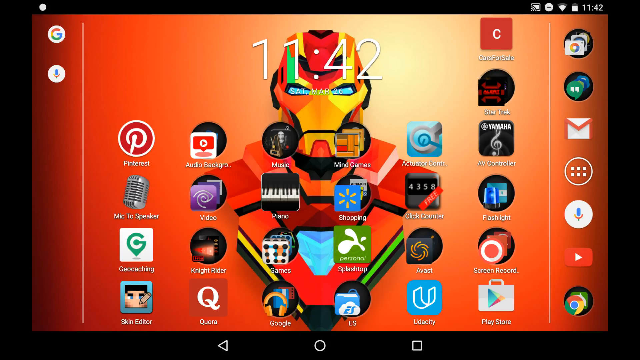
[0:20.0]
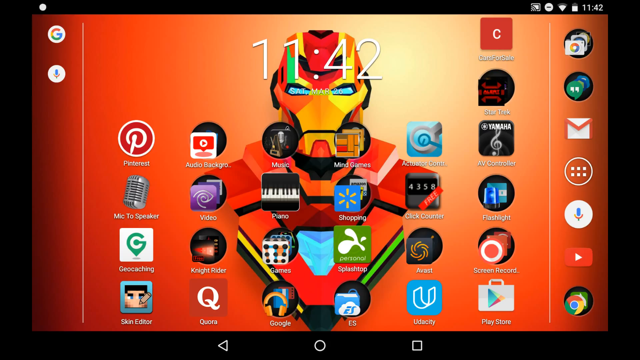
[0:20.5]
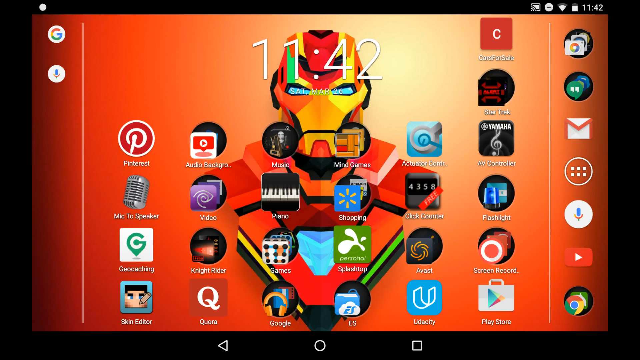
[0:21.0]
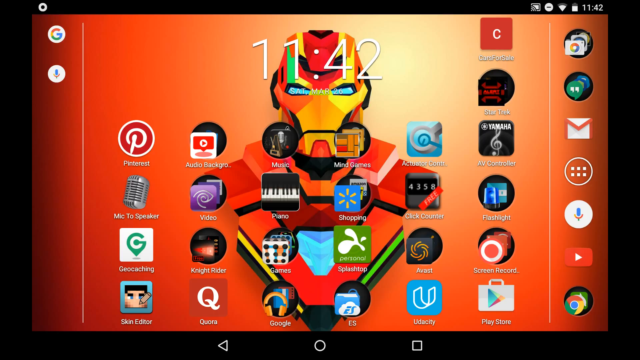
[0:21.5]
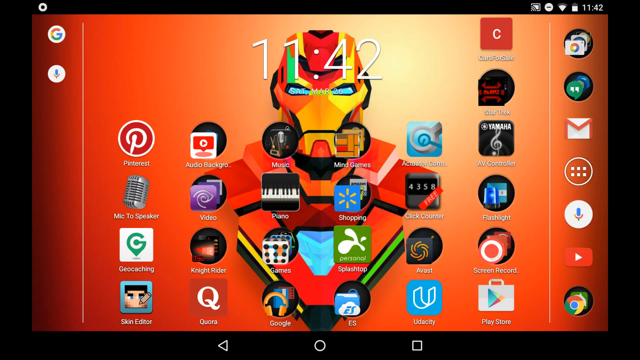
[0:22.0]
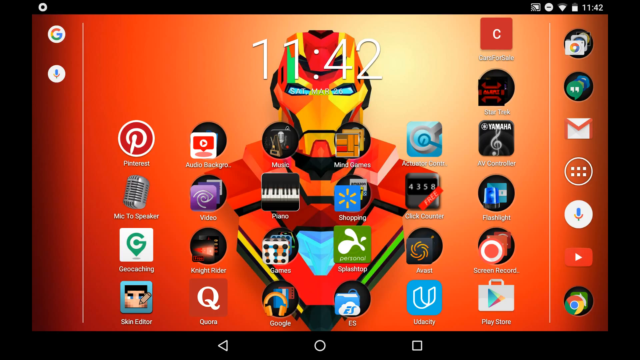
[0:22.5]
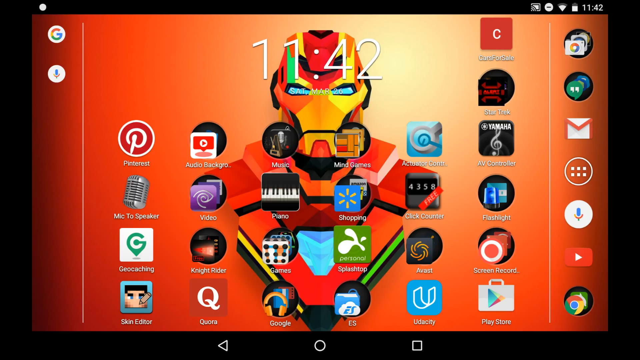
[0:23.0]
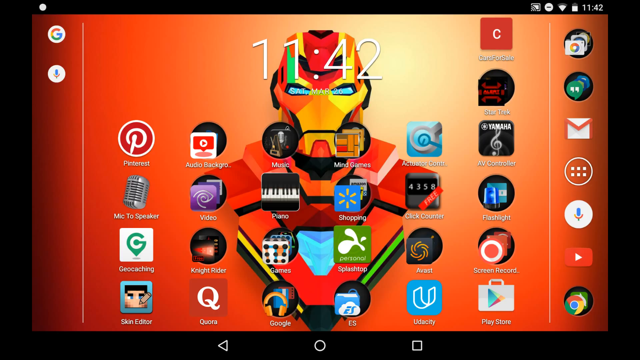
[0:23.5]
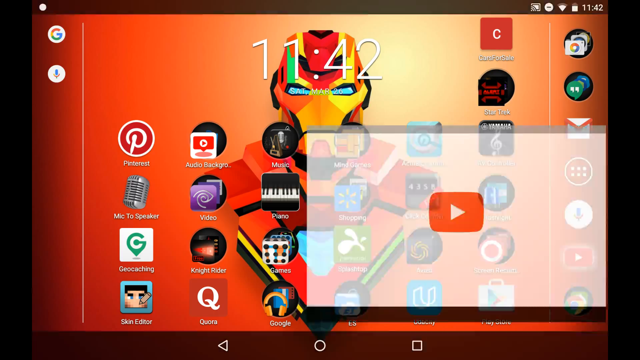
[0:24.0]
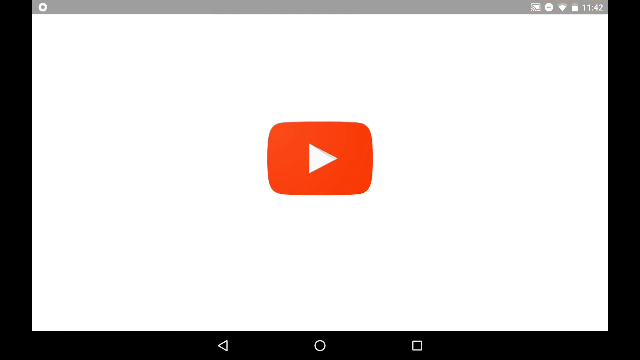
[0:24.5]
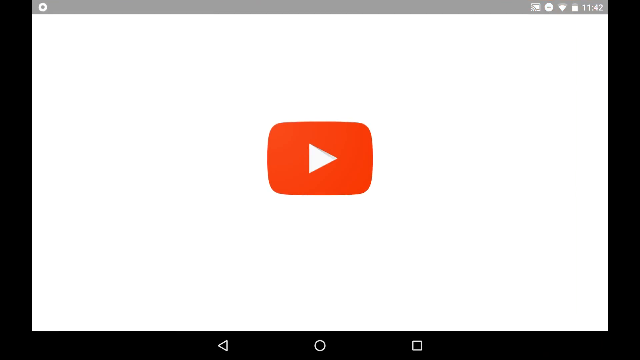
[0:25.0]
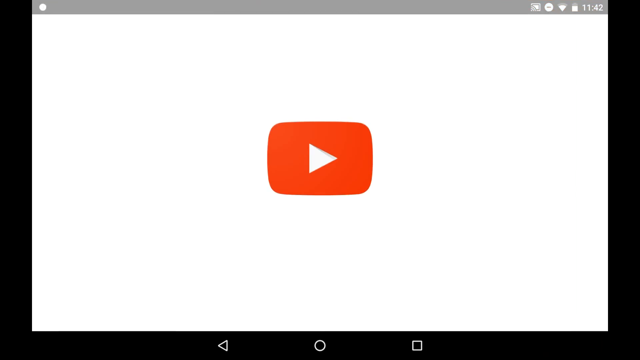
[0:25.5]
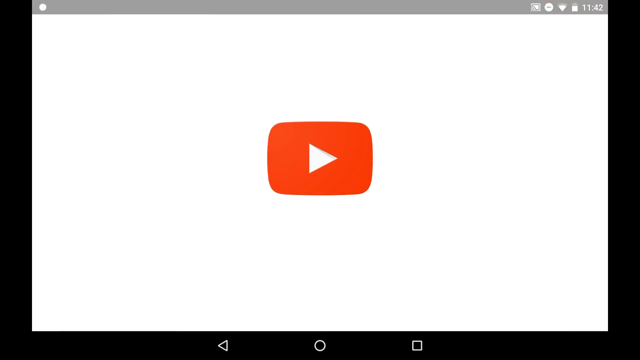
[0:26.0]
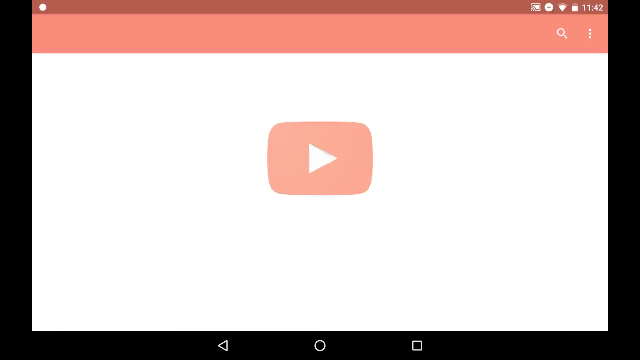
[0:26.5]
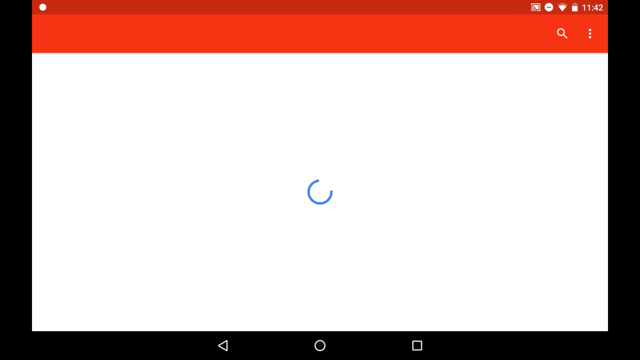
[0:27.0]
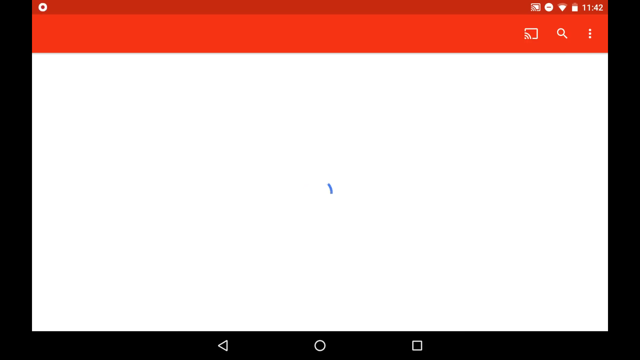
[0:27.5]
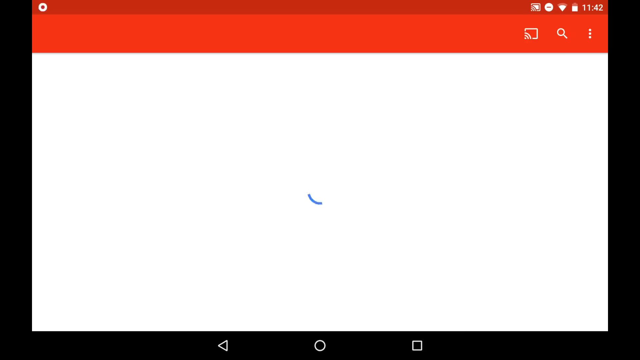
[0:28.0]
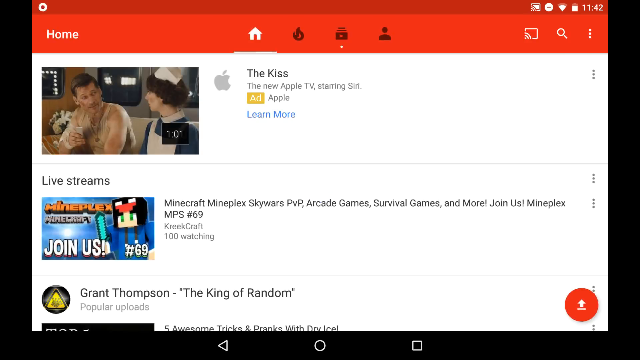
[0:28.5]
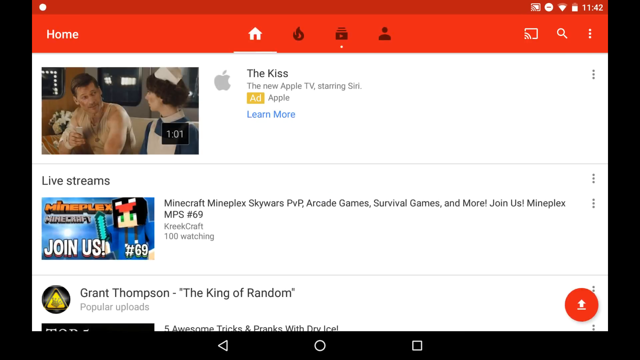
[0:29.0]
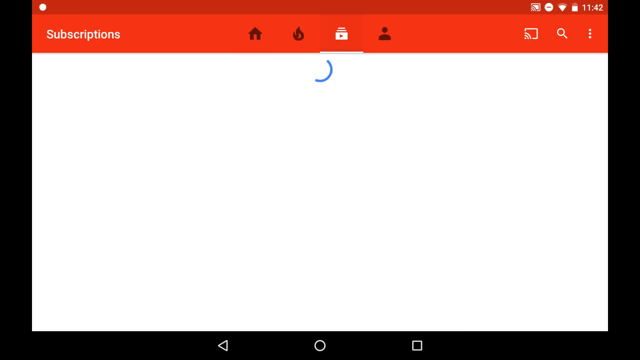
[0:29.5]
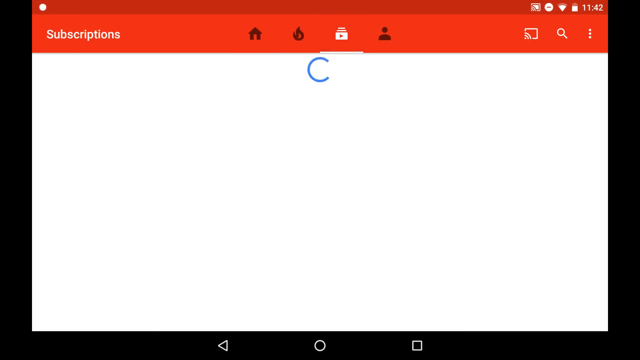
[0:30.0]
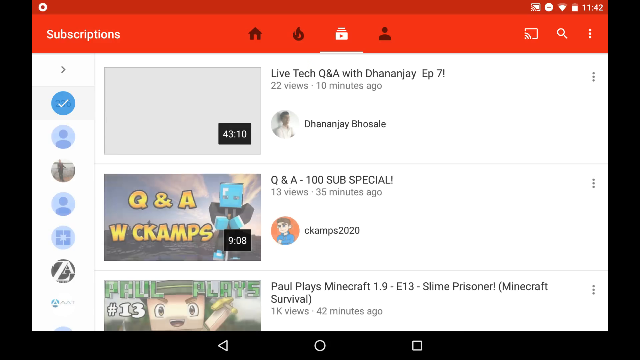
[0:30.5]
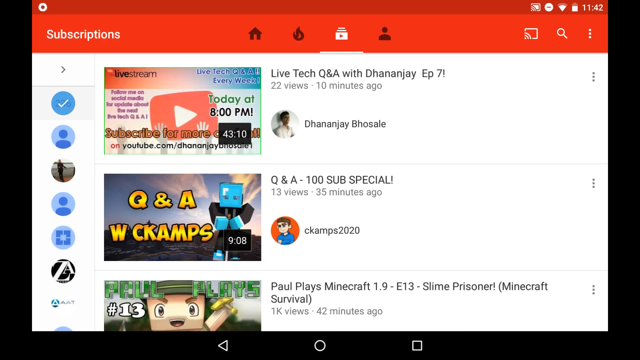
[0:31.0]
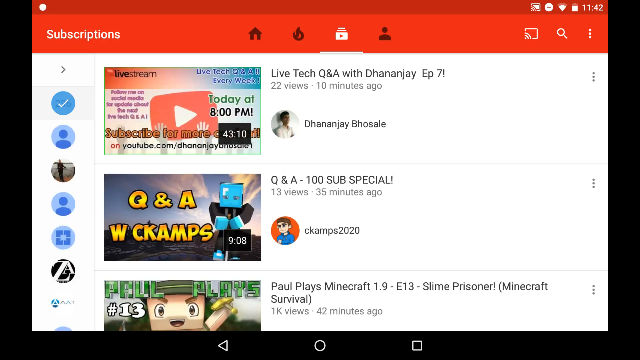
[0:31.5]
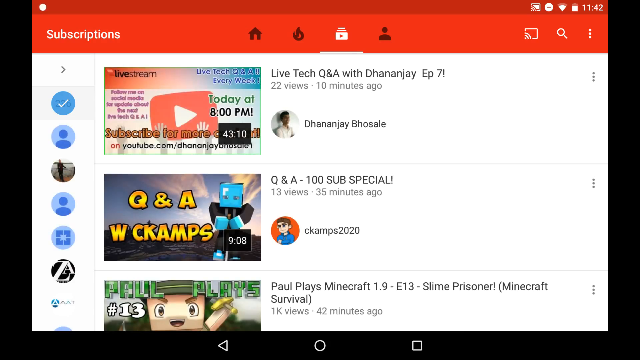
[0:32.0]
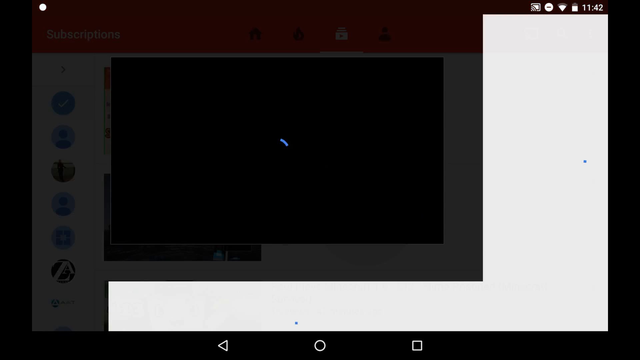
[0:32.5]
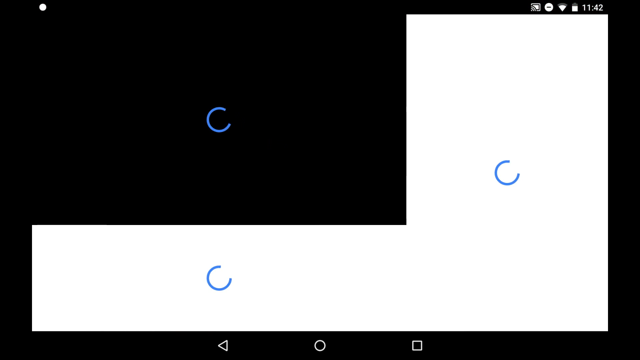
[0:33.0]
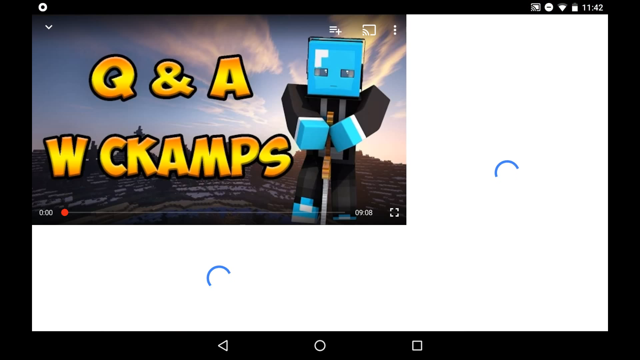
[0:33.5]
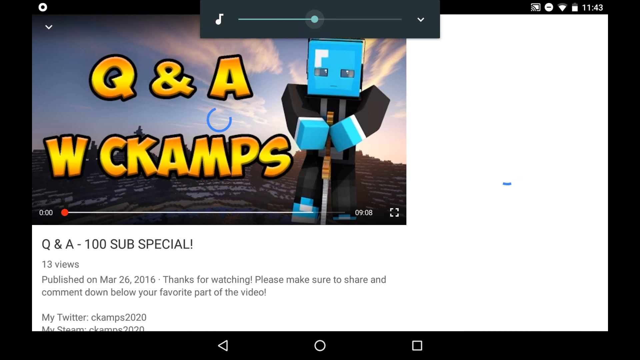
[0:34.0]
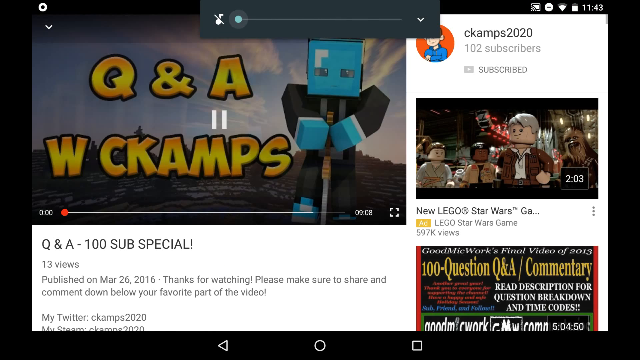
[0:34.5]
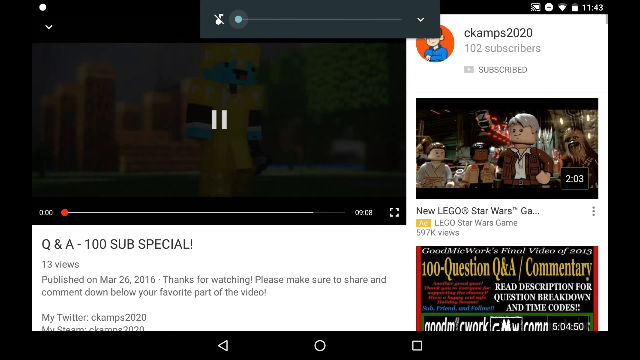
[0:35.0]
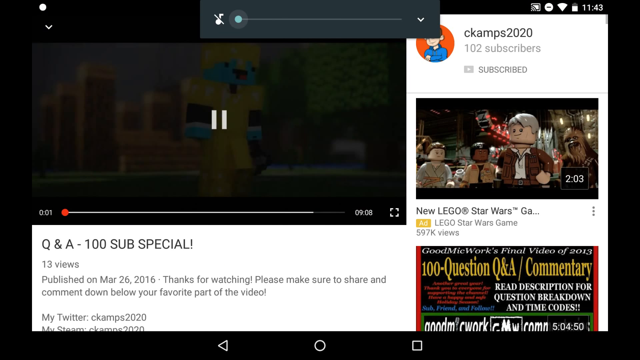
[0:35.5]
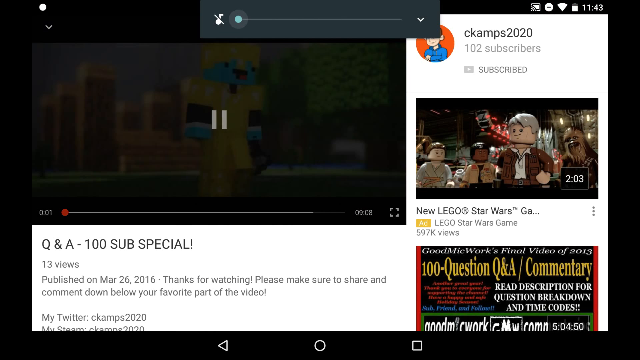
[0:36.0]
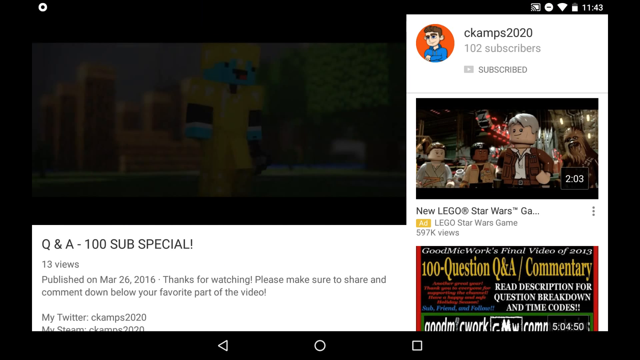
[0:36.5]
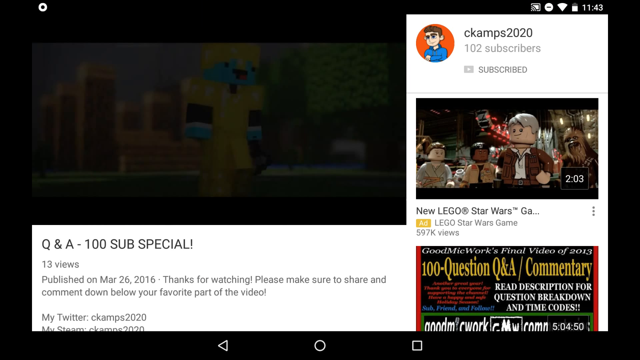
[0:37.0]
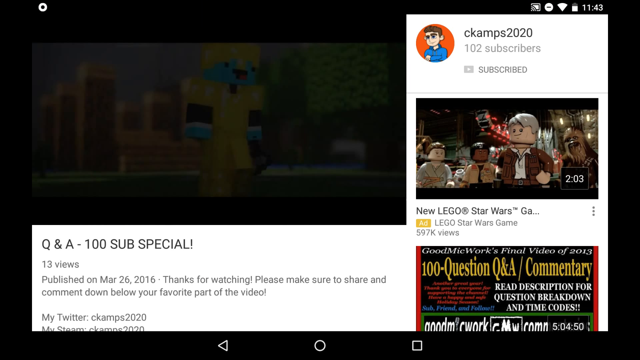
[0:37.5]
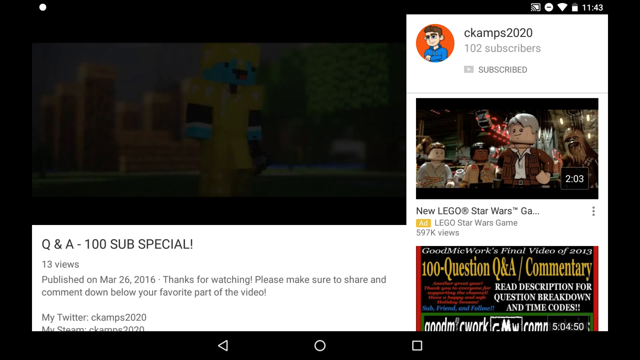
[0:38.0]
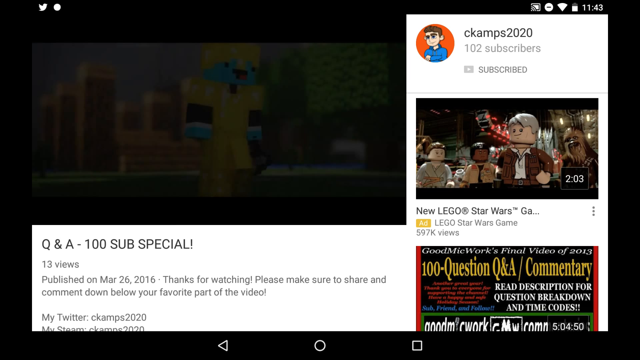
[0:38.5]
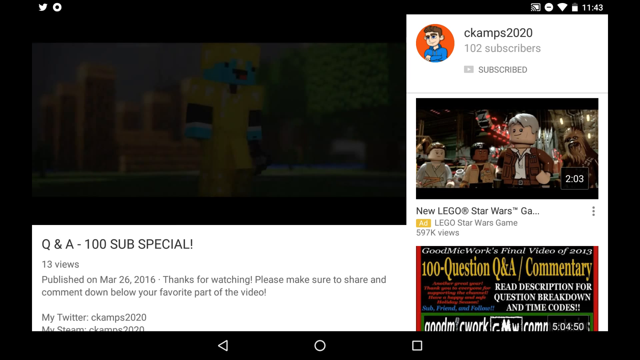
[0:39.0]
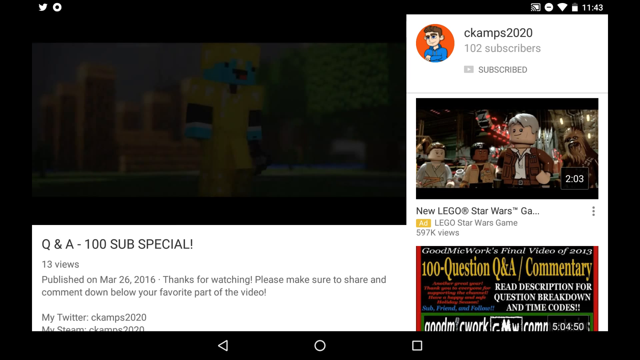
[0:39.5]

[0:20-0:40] What looks to be a tablet screen shows a red background with Iron Man, with the time 11:42 over Iron Man's face. Icons include Pinterest, Mic to Speaker, Geocaching, Skin Editor, audio, background, video, Knight Rider, forum, music, piano, games, Google, Mind Games, shopping, Splashtop, ES, click counter, Avast, Udacity, Cars for Sale, Star Trek, AV Controller, flashlight, Screen Record, and Play Store, plus Messages, email for Gmail, a little voice button, YouTube, and Chrome. Icons in the top right corner show the time 11:42, the battery, the Wi-Fi, and a screencast icon, and a little circle in the top left corner is sort of opening and closing. The screen then goes to YouTube, where the home page says "The Kiss, the new Apple TV", with an ad that says "Learn More". Live streams are listed for Minecraft, Mineplex, Skywars, PVP, arcade games, survival games, and more, with "Join us, Mineplex MPS number 69". Popular uploads appear under Grant Thompson, the King of Random. The view moves to subscriptions, showing videos such as "Live Tech Q&A with Donna J, episode 7", "Q&A, 100 subs special", and "Paul playing Minecraft 1.9, E13, Slime Prisoner, Minecraft Survival". A screen pops up for "Q&A, 100 subs special" with 13 views, published on March 26, 2016, and the text "Thanks for watching. Please make sure to share and comment down below your favorite part of the video." A Twitter handle, Seacamps2020, and a Steam name, Seacamps2020, are listed. Recommended videos on the right include "New LEGO Star Wars" with 597K views. The video starts, showing a yellow and blue Minecraft character.